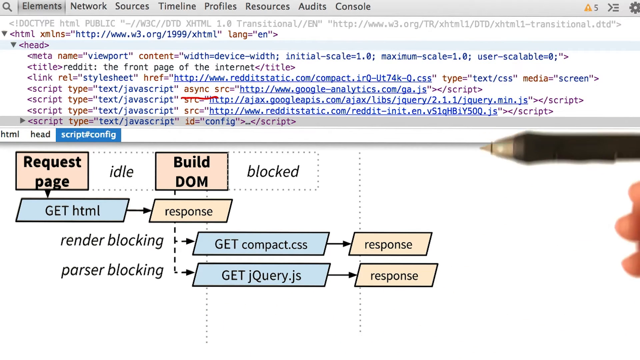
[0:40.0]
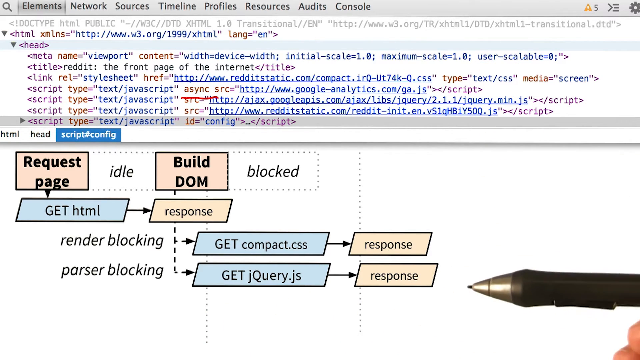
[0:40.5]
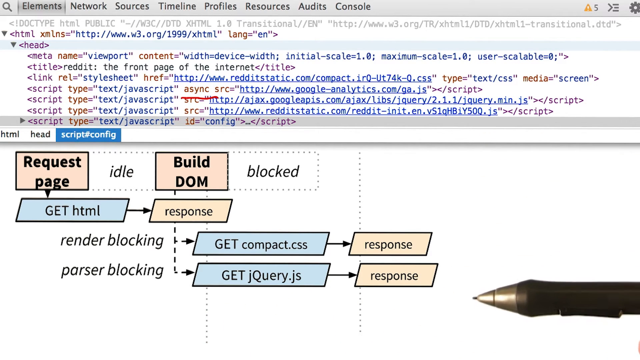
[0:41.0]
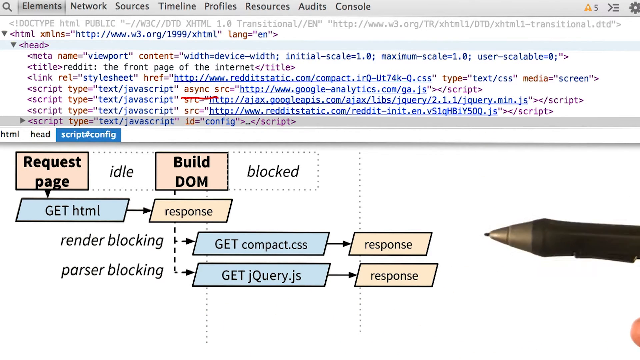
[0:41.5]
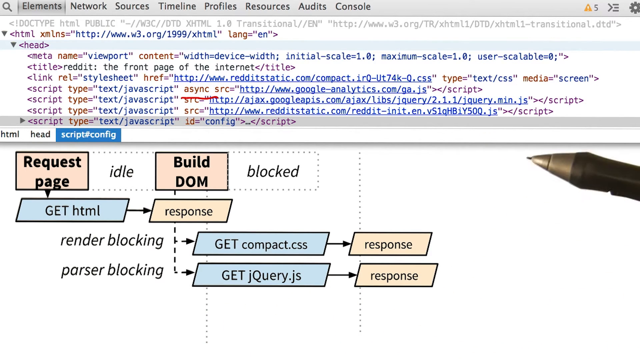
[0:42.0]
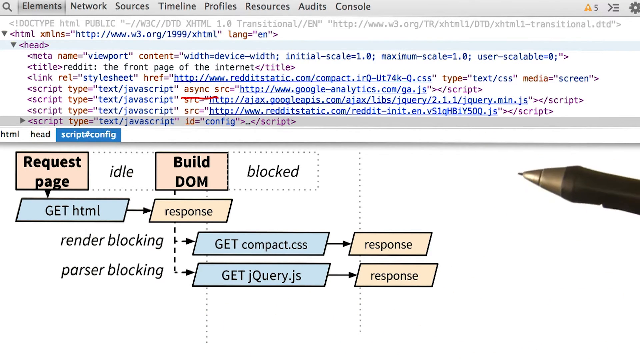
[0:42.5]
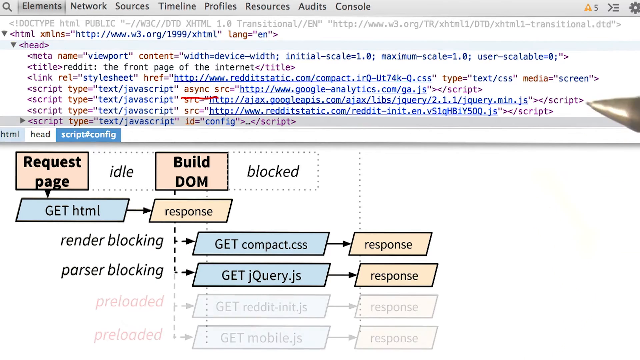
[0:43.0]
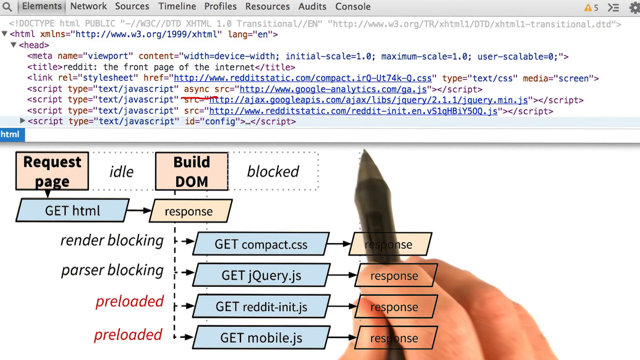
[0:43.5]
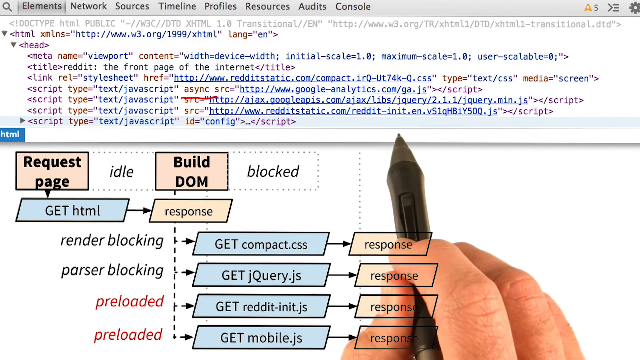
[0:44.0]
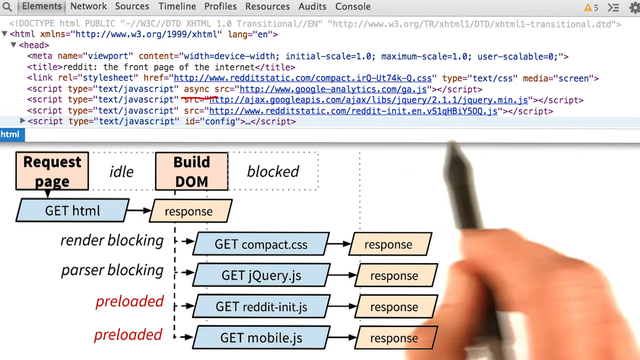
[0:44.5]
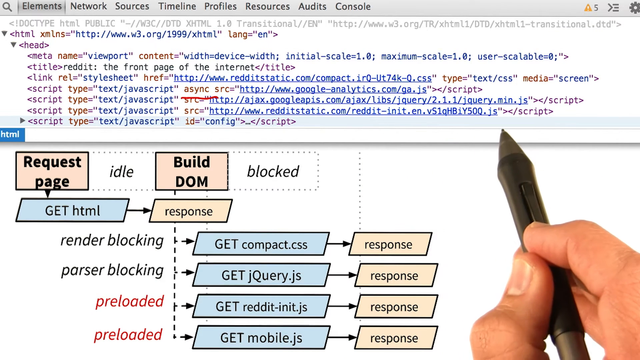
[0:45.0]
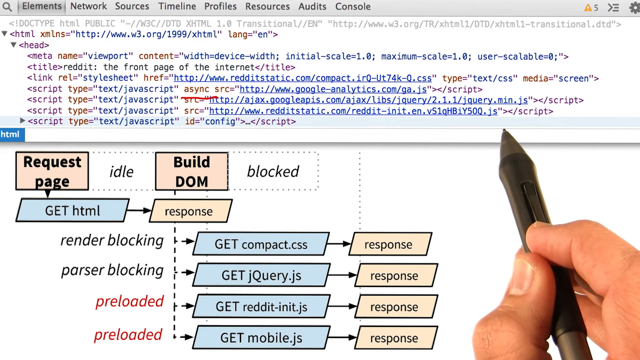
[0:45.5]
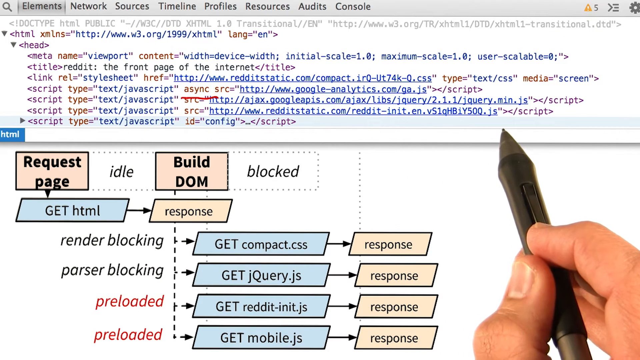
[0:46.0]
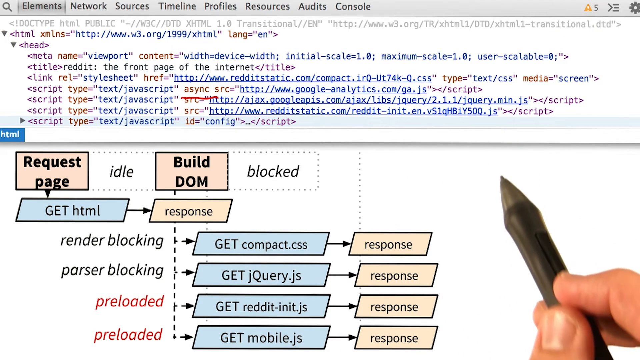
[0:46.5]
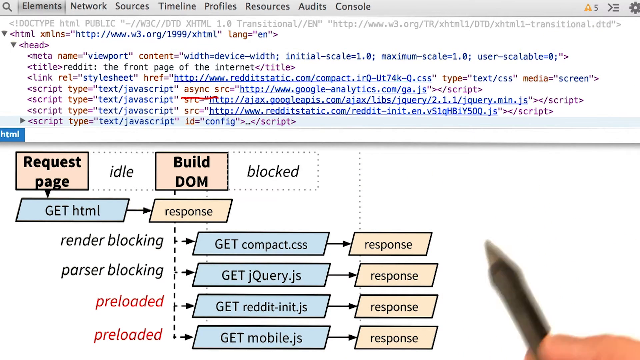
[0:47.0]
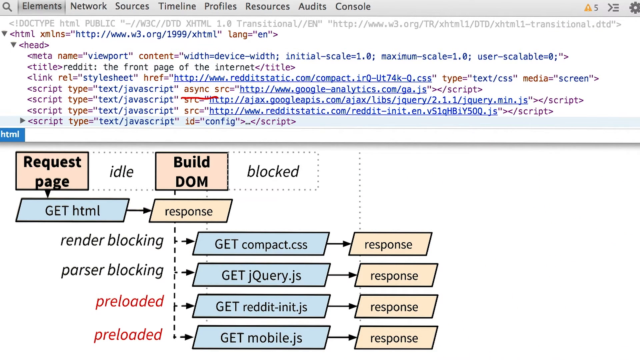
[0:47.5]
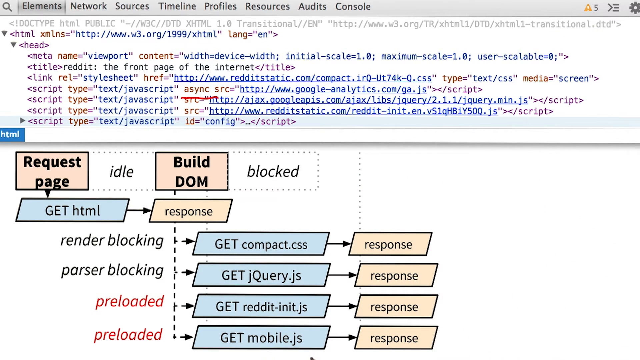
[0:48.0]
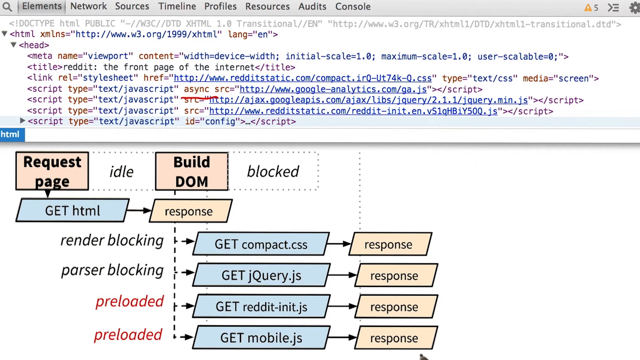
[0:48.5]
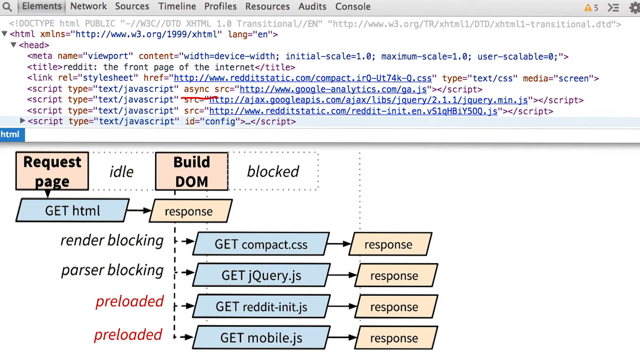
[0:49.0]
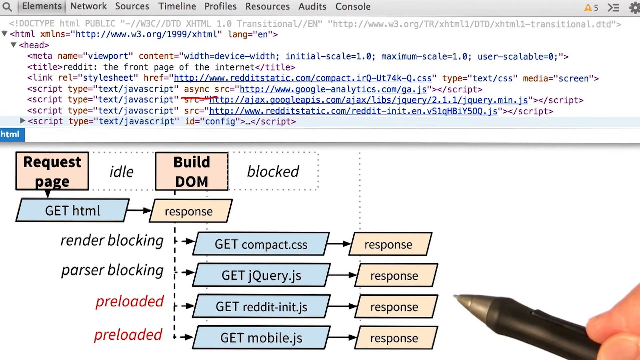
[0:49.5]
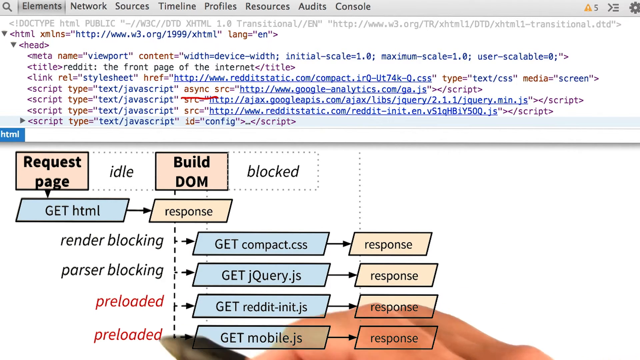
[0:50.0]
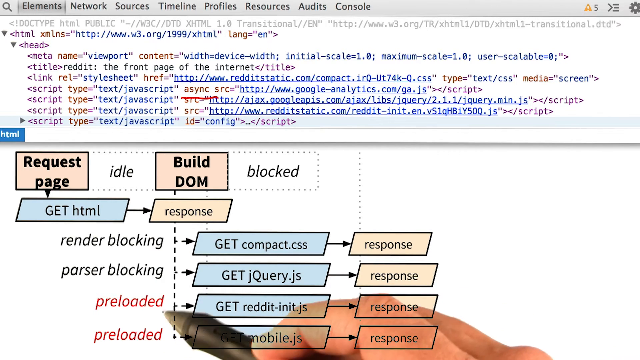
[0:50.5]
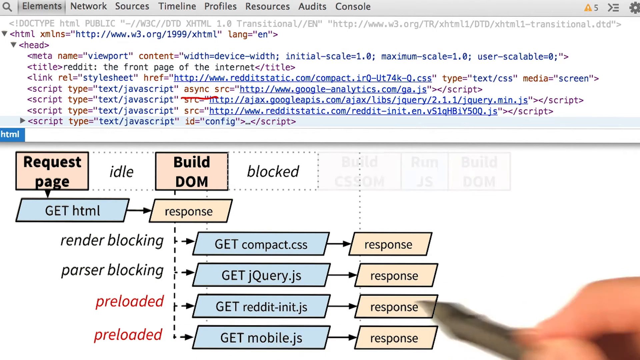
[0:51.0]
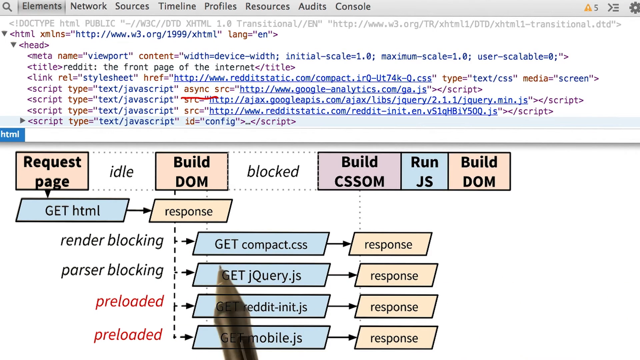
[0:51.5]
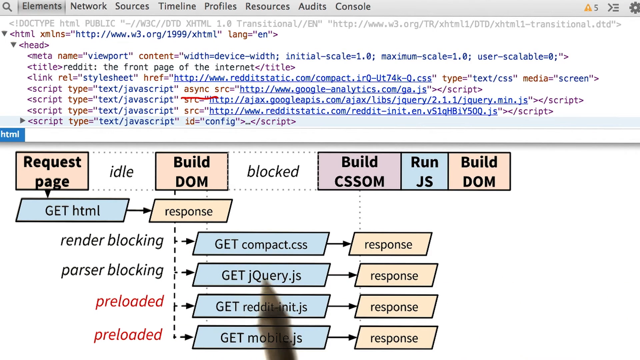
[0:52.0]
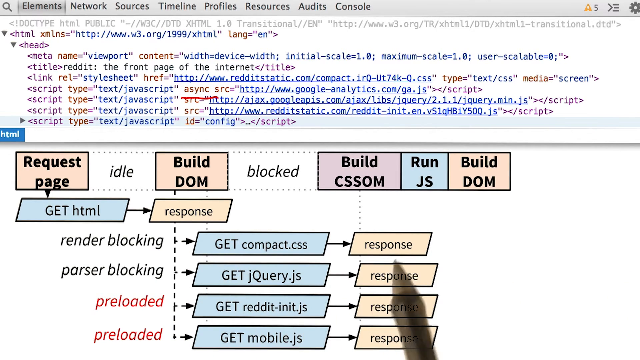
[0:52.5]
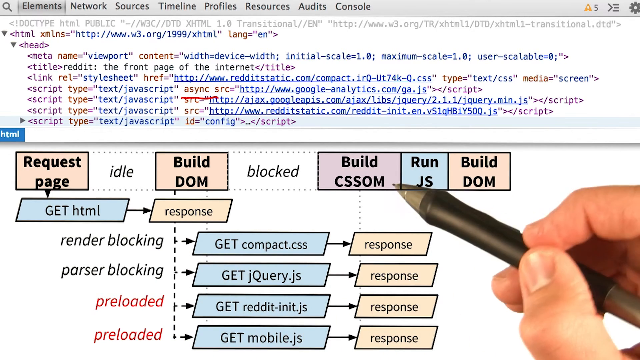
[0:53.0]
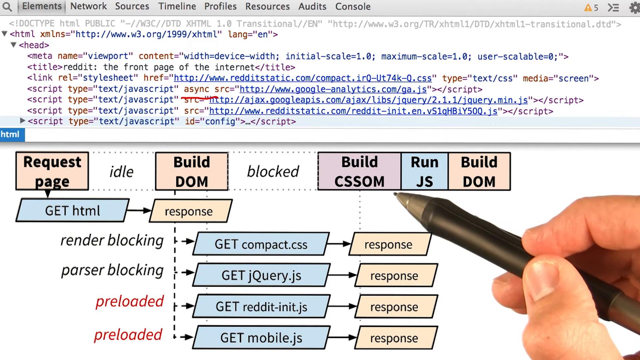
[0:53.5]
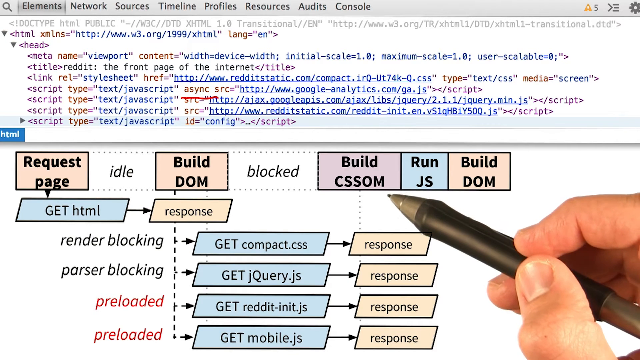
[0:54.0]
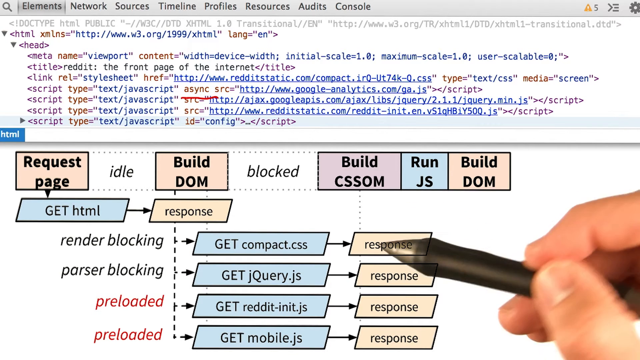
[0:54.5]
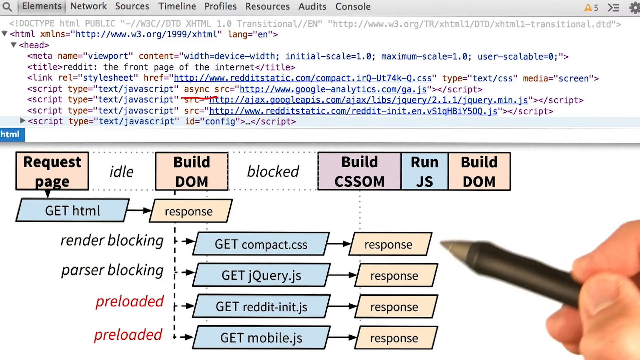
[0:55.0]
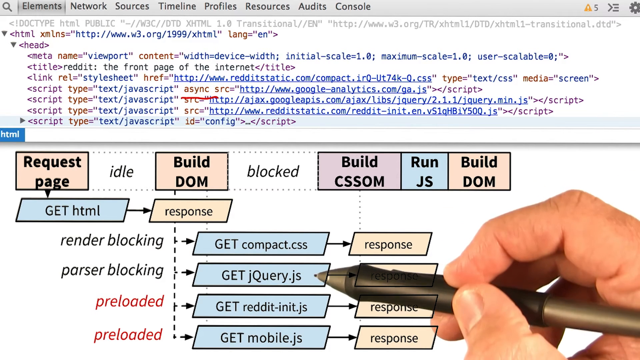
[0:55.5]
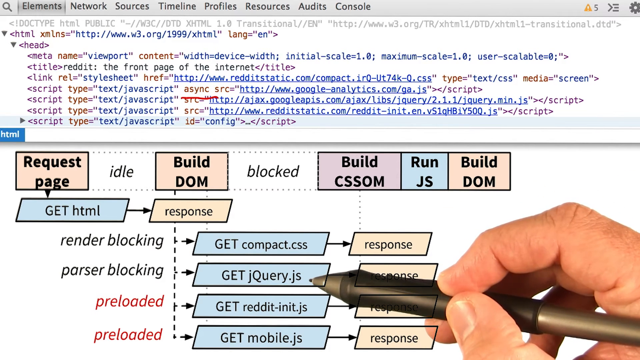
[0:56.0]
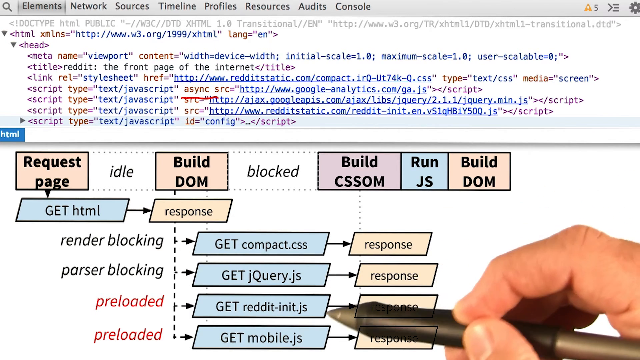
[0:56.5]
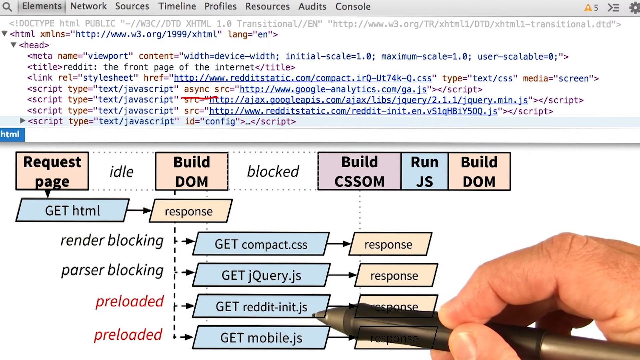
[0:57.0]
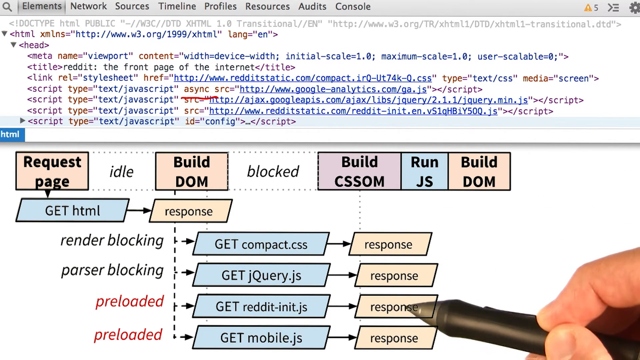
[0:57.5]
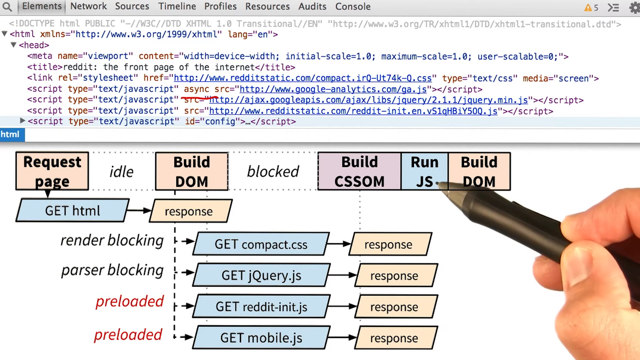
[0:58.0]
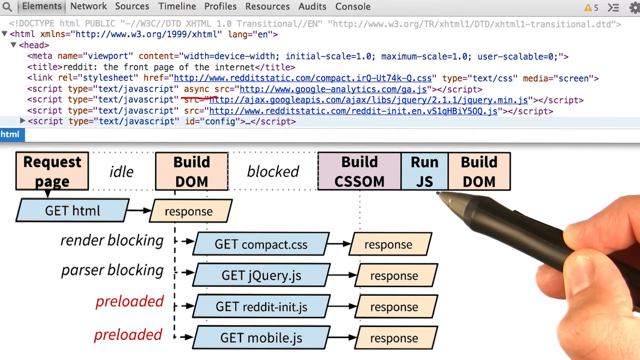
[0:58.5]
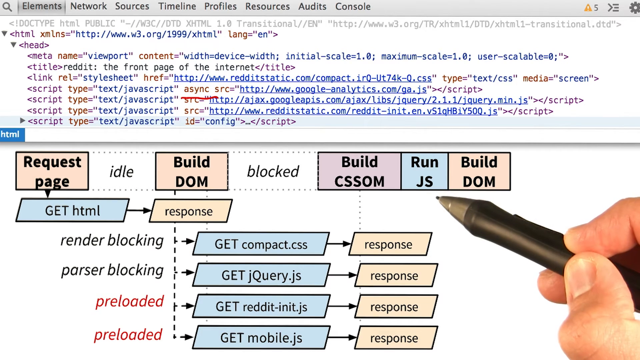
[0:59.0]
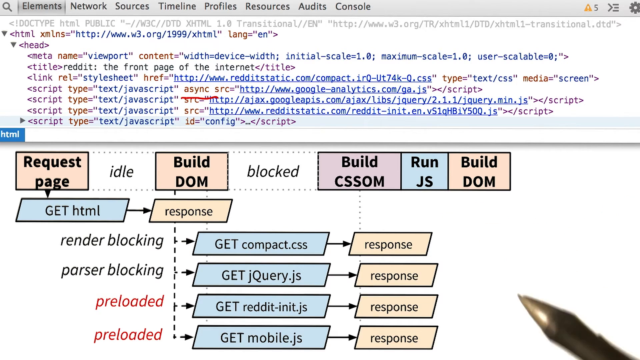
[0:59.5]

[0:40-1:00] This is apparently a training video for developer code. The top part of the page shows various lines of code, and the bottom part shows what these lines do in chart form. Boxes say "request page", "build the DOM" and "Get HTML"; the last has an arrow, and next to it is "Response". A couple of lines down is "Render blocking" with boxes showing what it is, and another label says "Parser blocking". The chart is color-coded, with boxes and arrows pointing to different types of actions or responses, and seems to represent the hierarchy of the code. Only a hand holding a stylus is visible; it points to some code at the bottom and then to some of the boxes, going back and forth between the code and the hierarchy for a few seconds.